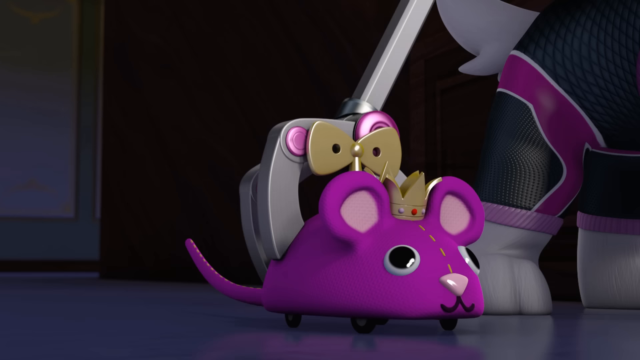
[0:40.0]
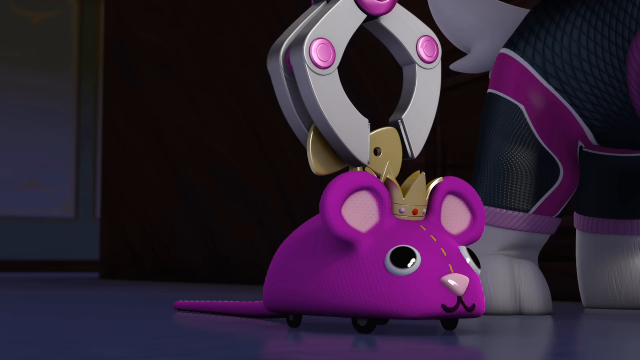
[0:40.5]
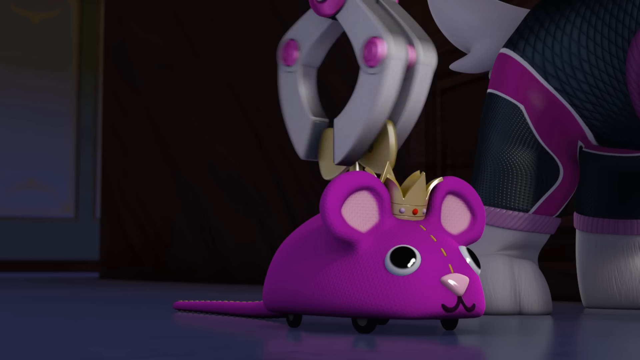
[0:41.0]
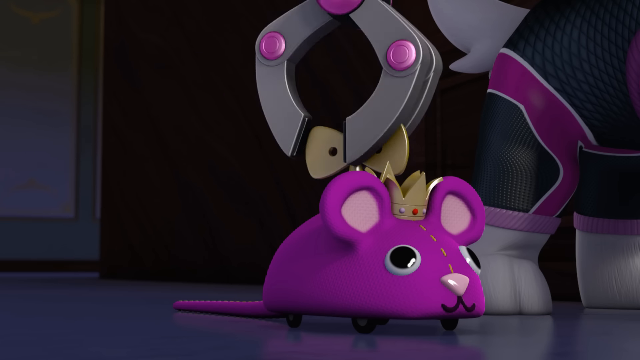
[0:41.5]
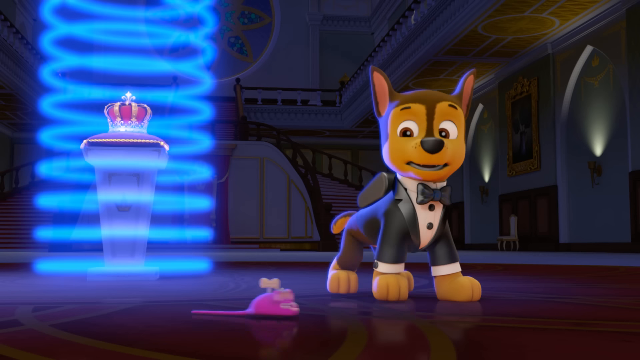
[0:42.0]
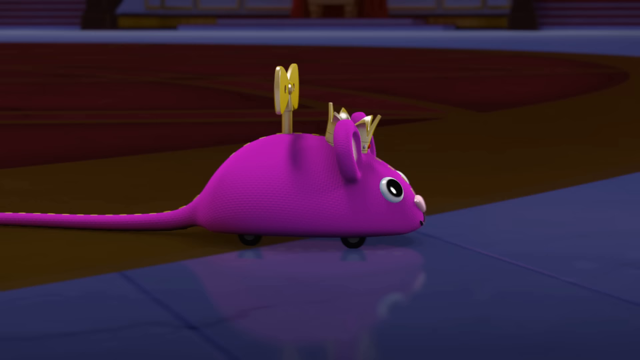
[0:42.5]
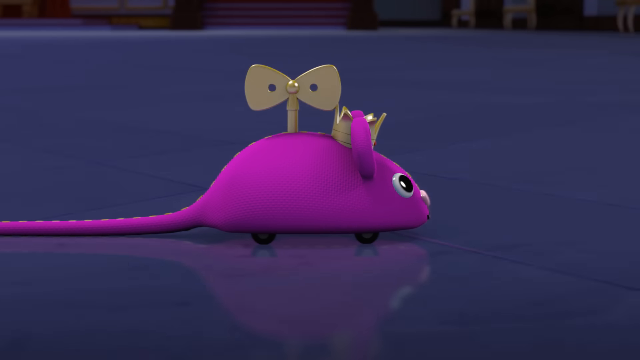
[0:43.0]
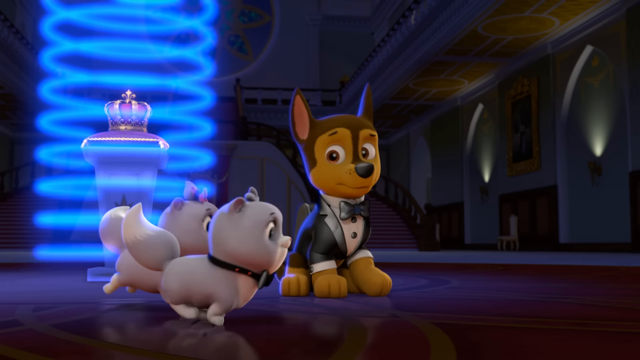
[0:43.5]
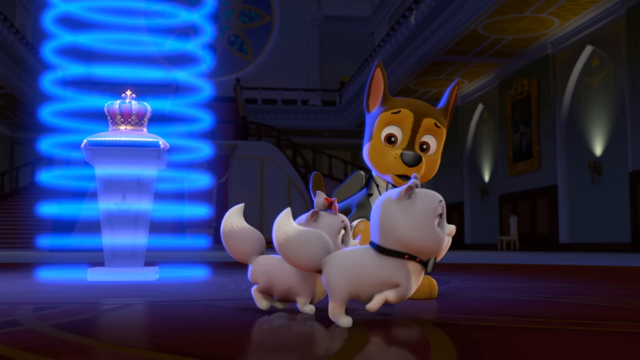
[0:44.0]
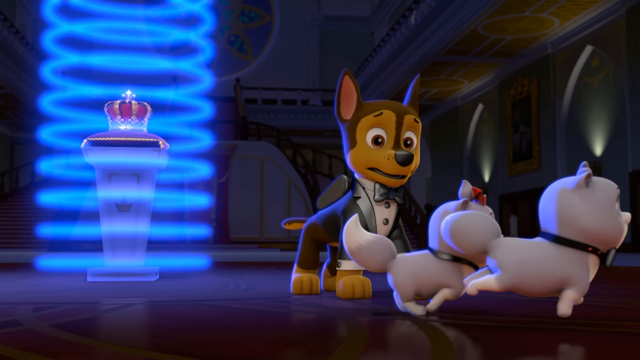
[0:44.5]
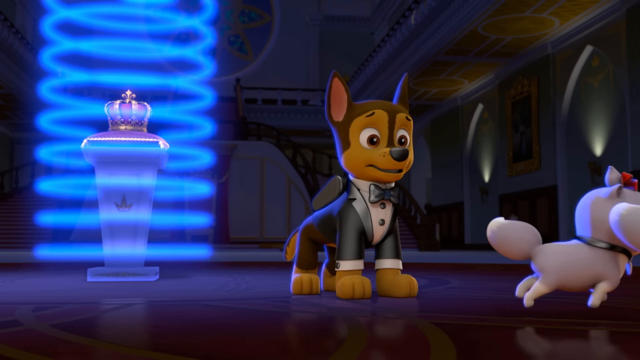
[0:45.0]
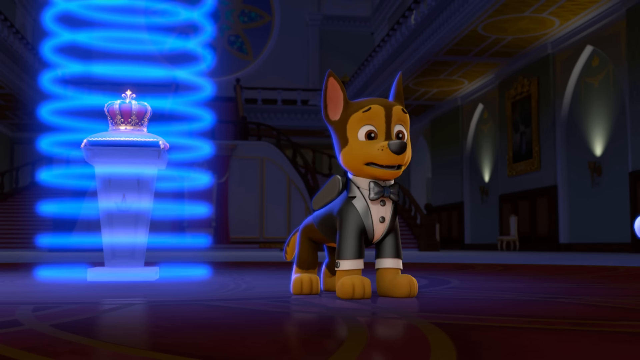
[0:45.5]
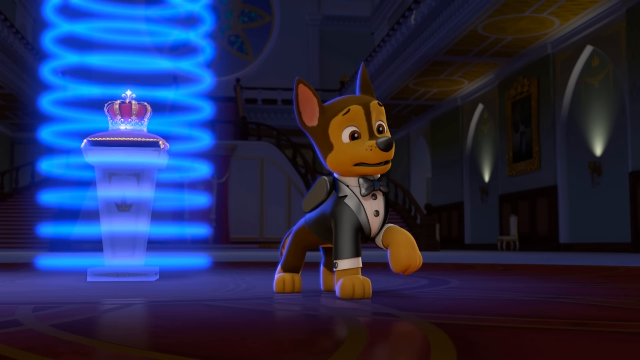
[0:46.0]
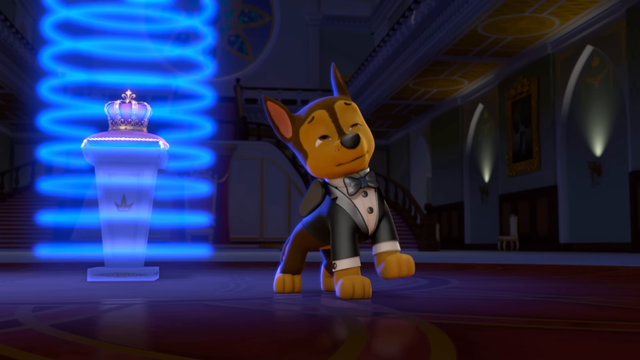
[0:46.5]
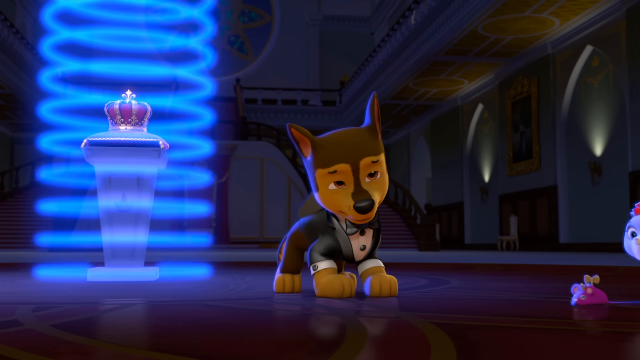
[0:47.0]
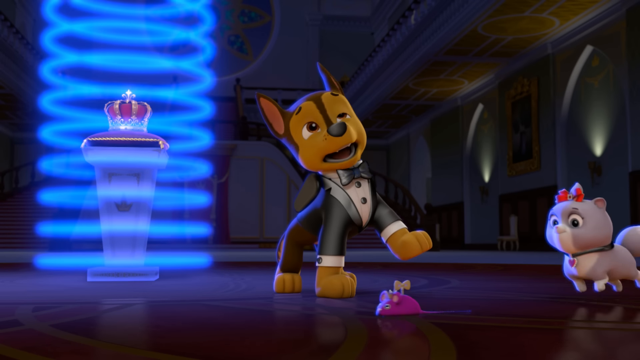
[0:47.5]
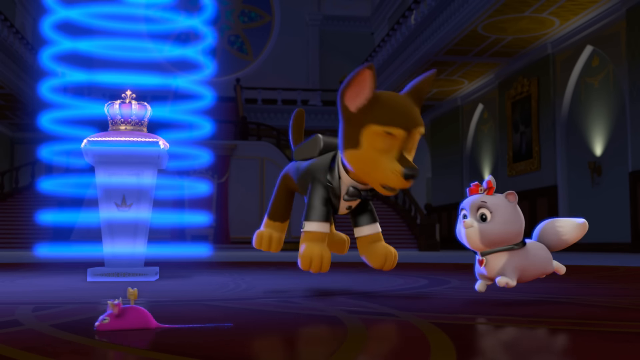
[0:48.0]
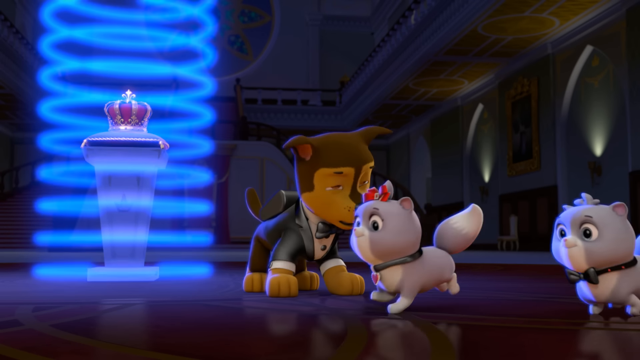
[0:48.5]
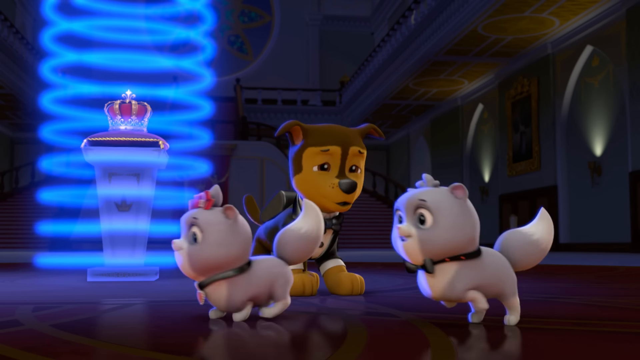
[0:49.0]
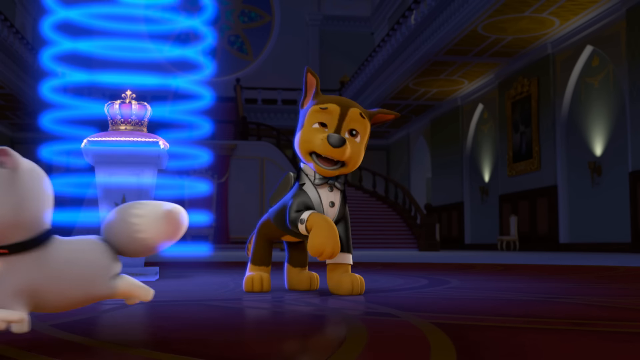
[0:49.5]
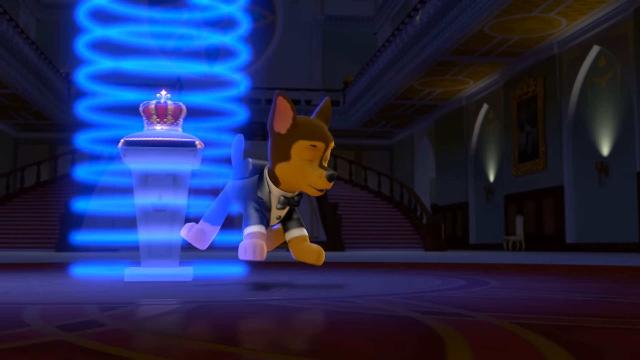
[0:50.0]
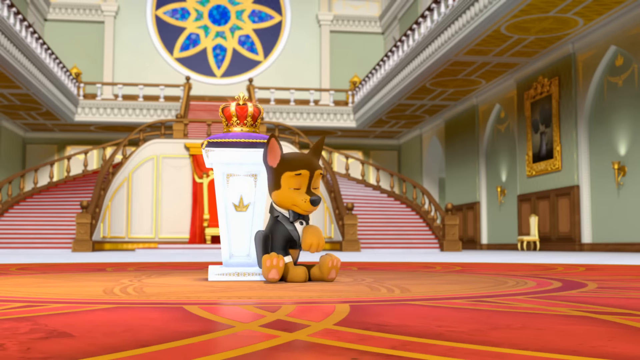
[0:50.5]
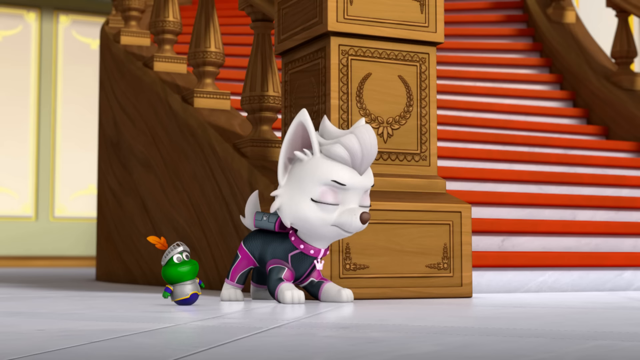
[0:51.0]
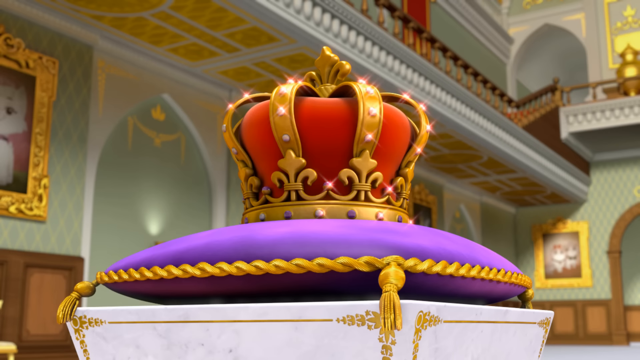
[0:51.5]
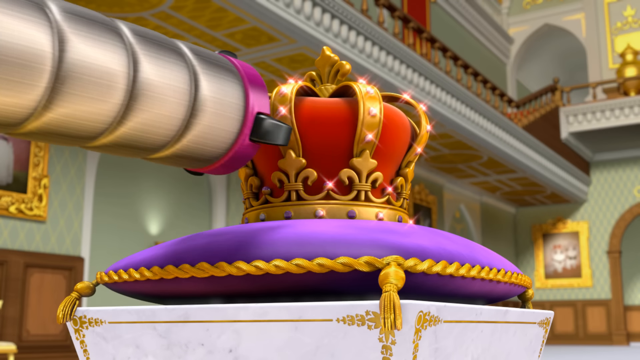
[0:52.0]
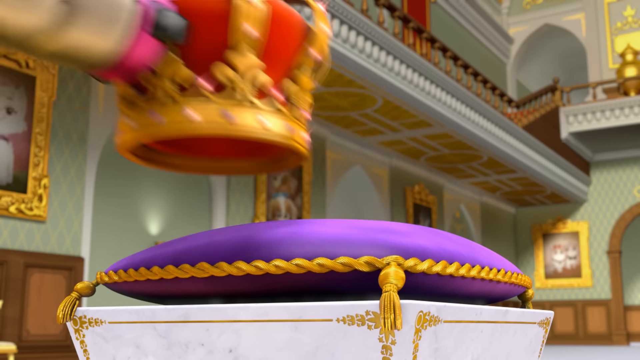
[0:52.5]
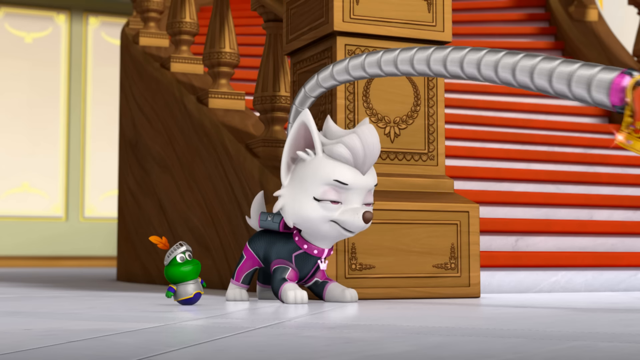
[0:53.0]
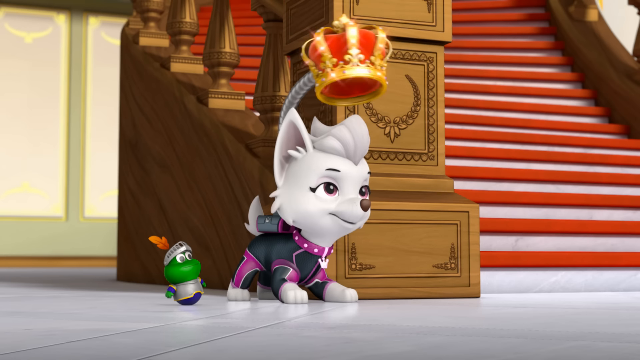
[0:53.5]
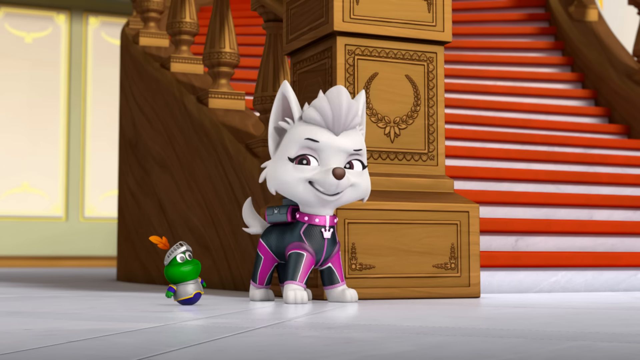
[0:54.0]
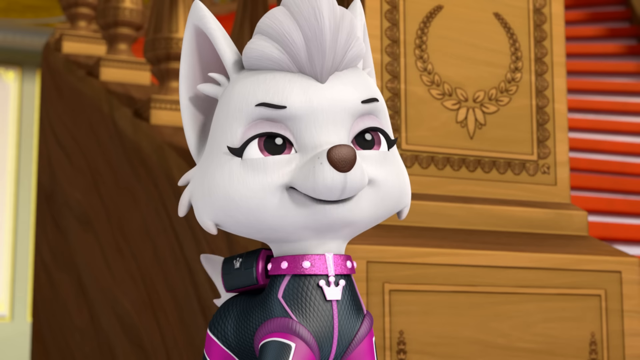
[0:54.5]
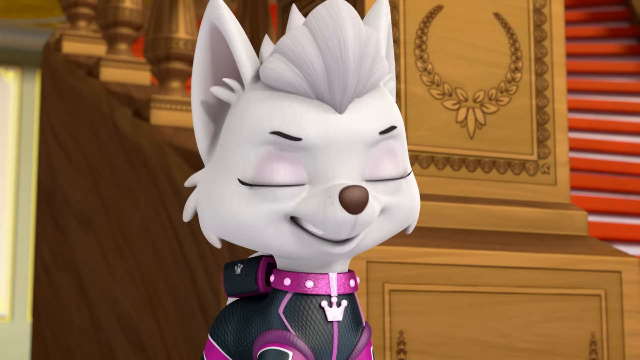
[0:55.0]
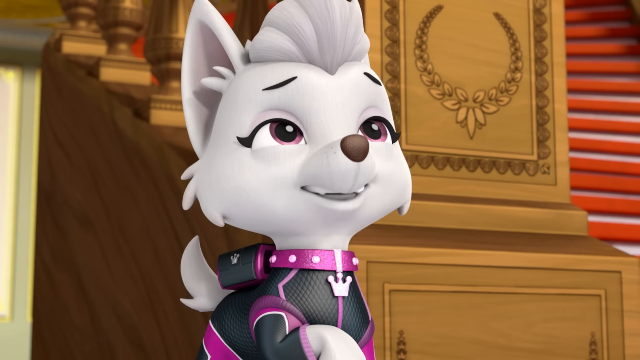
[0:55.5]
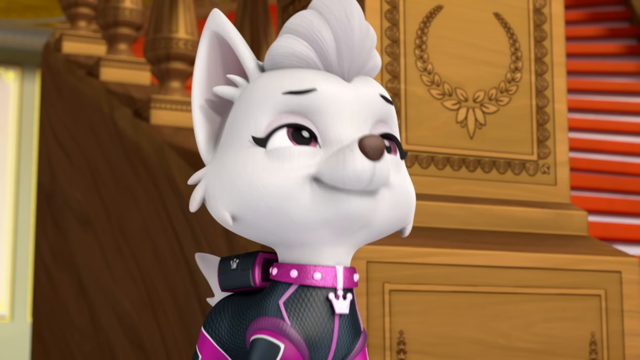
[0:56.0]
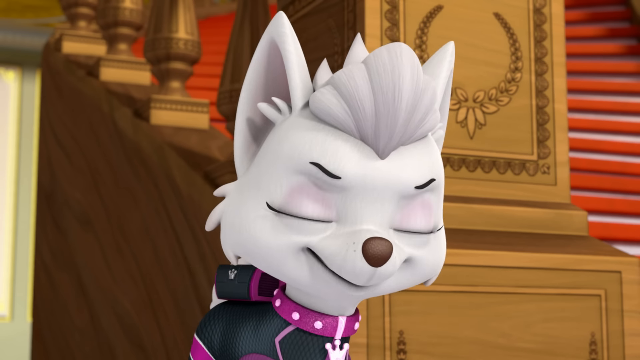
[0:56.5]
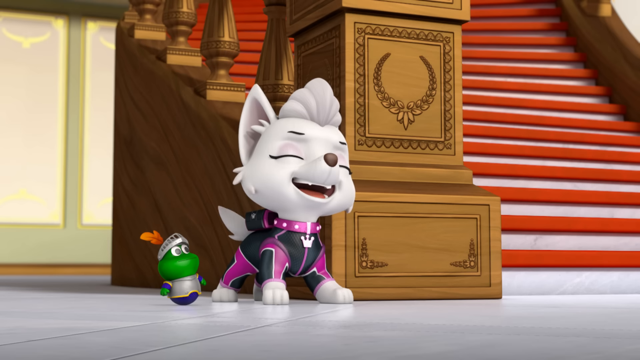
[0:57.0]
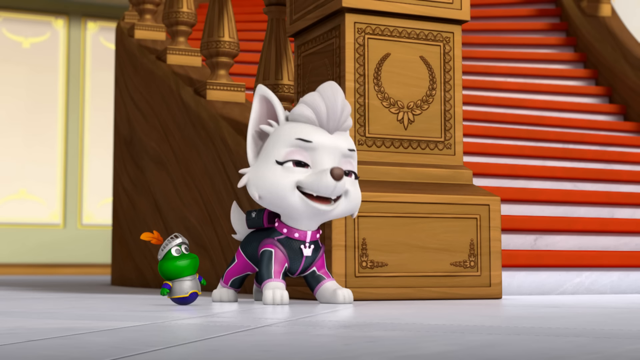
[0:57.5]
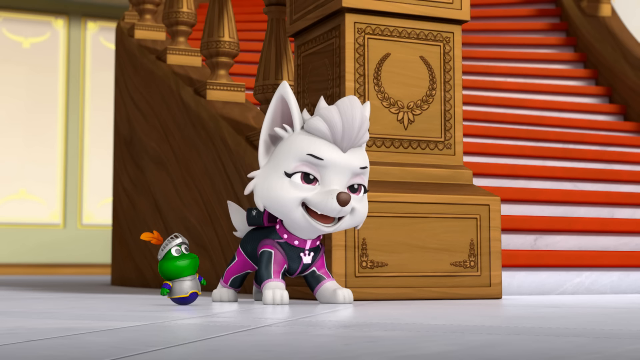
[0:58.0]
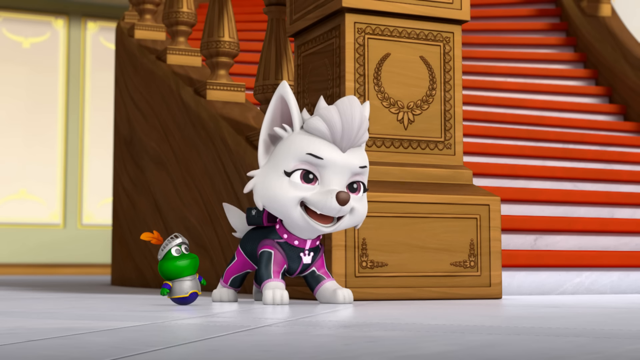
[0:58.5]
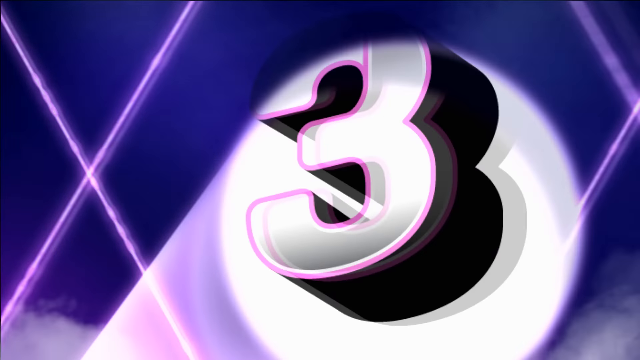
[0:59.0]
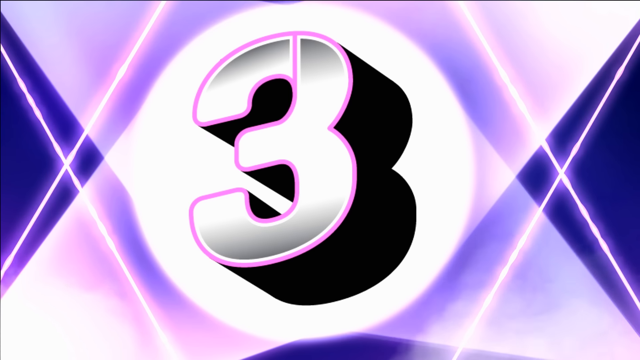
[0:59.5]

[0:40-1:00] A small purple clockwork mouse wearing a small crown appears. A machine turns the key on the mouse, and the mouse sets off across the floor. Two white cats run past, chasing the mouse; one has a pink ribbon in its hair. It looks like they are in a palace. A dog in a dinner jacket is there, and behind him is a crown protected by lasers. The dog in the dinner jacket bumps into where the crown is, which deactivates the laser beams around it, and the lasers disappear. A machine comes out of the small white dog's back and takes the crown, and she laughs. All the while, the small green creature is next to the white cat. A number three is then shown, illuminated with spotlights in the sky, with searchlights and spotlights around it, in a sort of bubble writing.